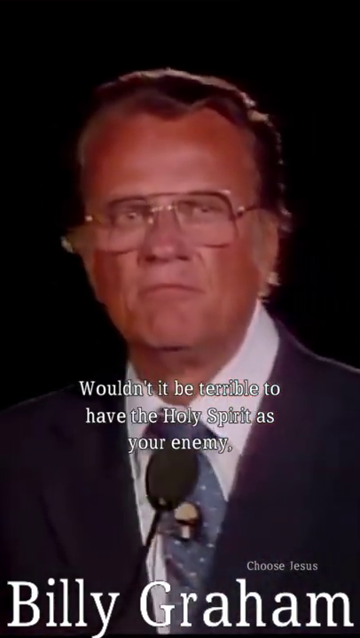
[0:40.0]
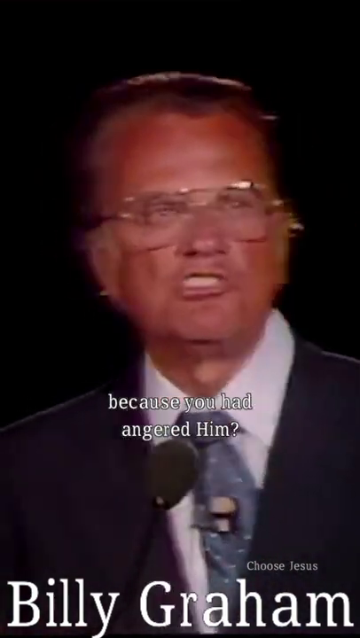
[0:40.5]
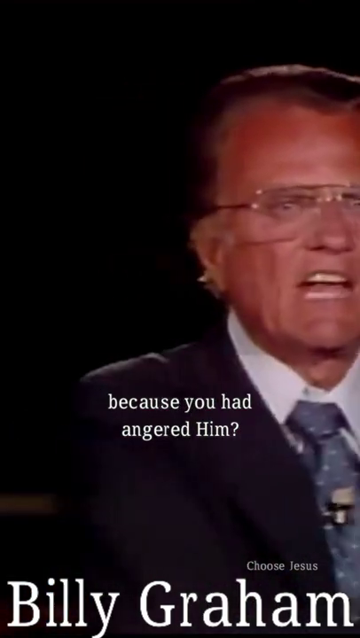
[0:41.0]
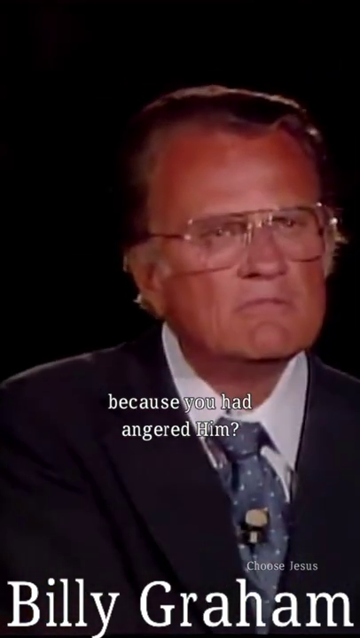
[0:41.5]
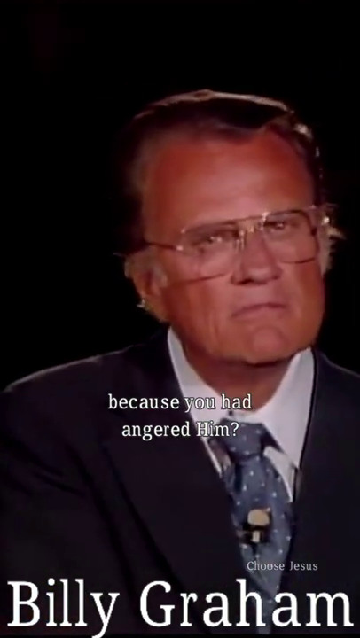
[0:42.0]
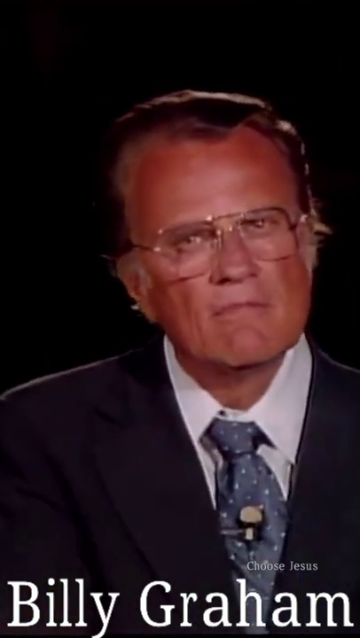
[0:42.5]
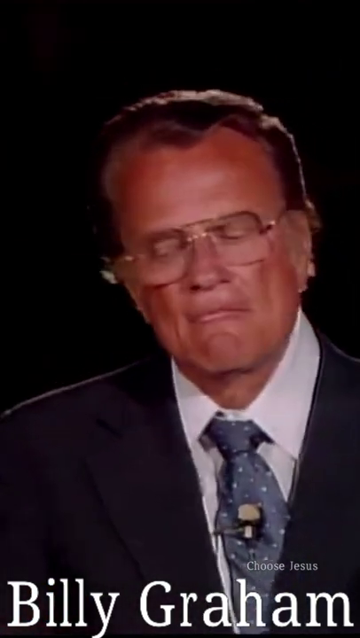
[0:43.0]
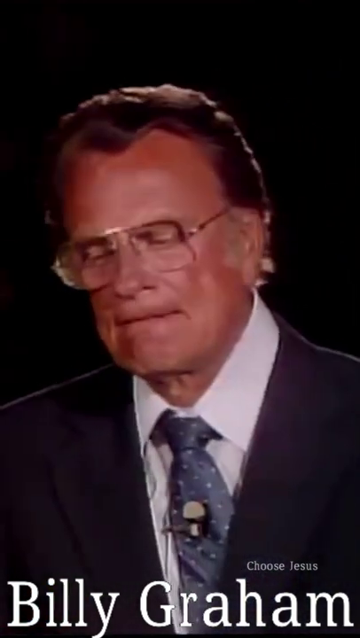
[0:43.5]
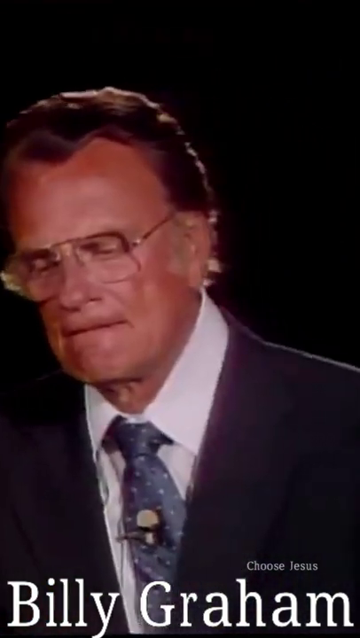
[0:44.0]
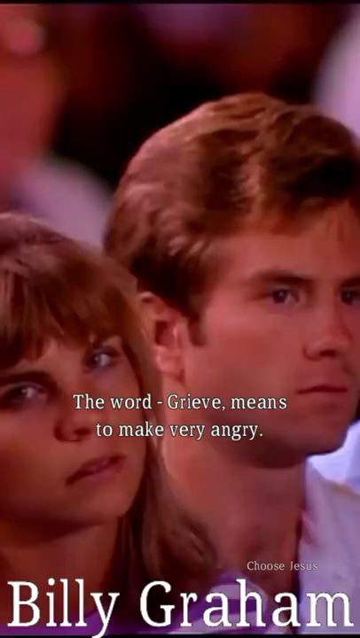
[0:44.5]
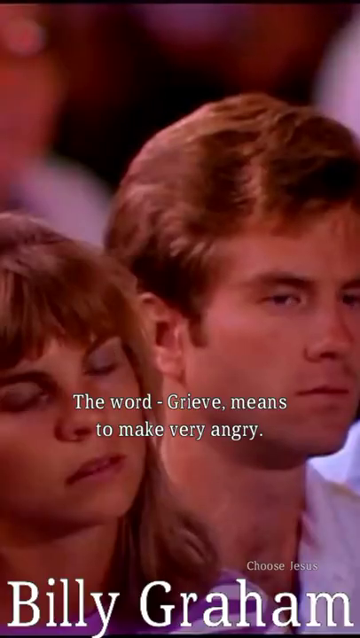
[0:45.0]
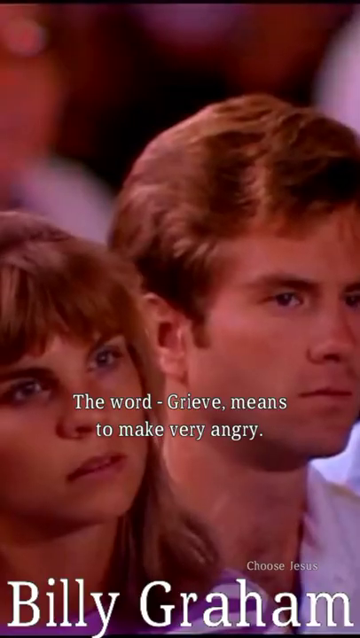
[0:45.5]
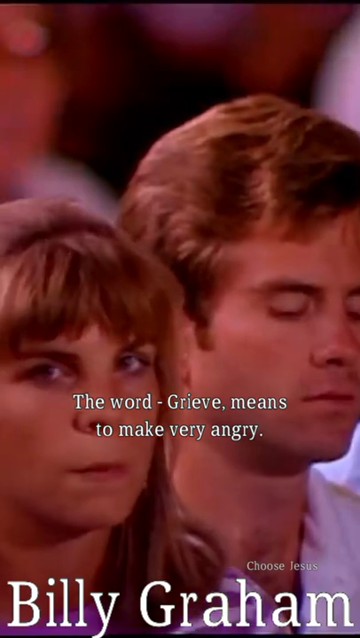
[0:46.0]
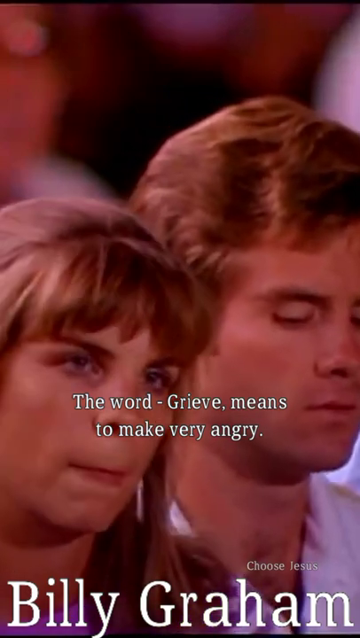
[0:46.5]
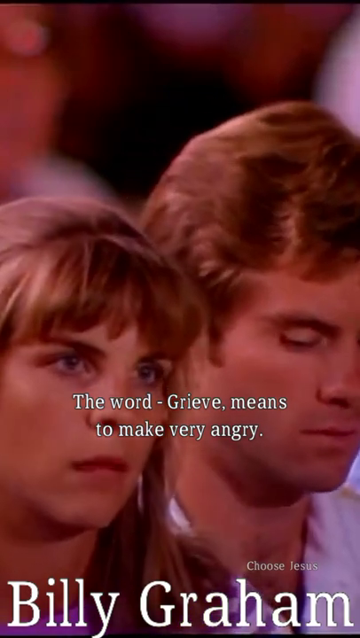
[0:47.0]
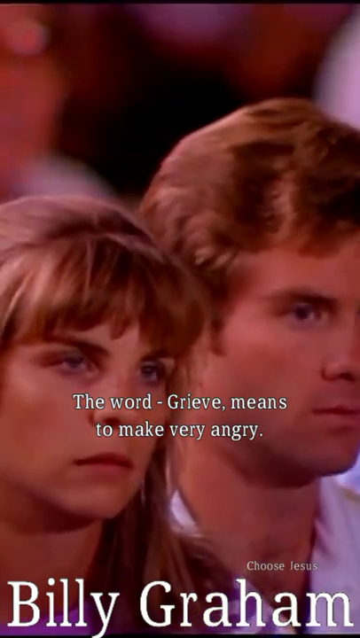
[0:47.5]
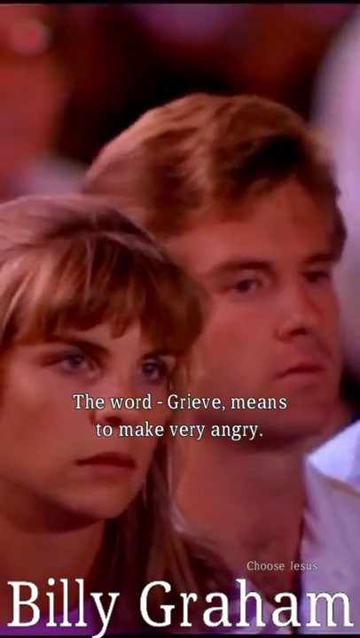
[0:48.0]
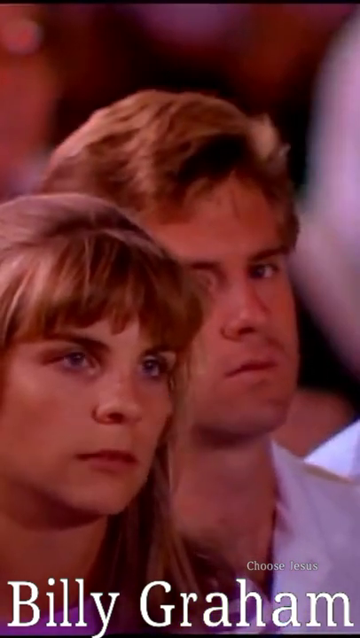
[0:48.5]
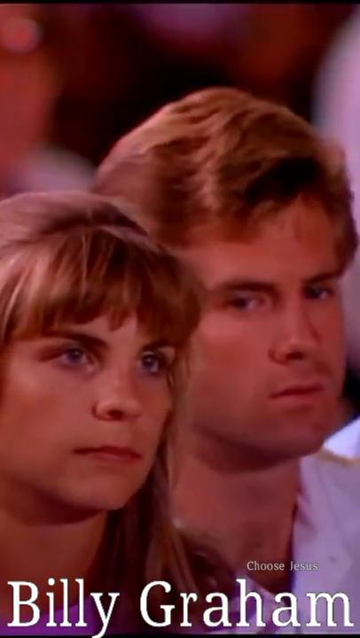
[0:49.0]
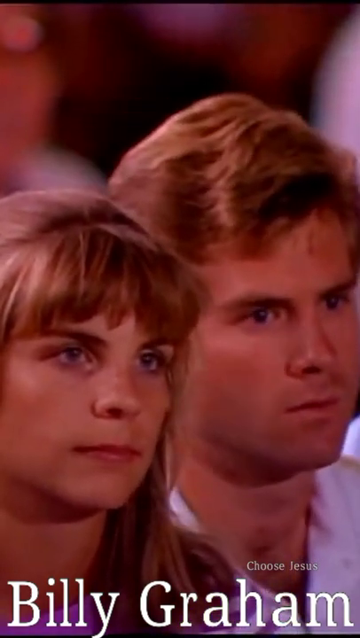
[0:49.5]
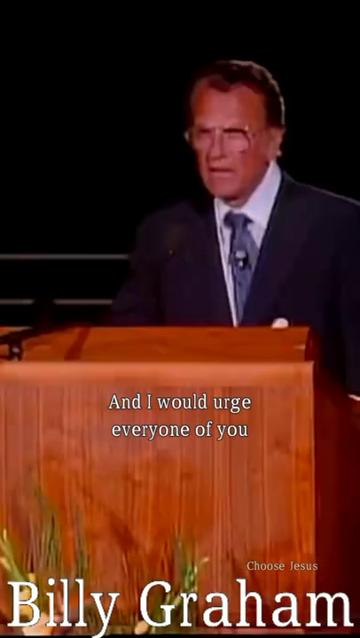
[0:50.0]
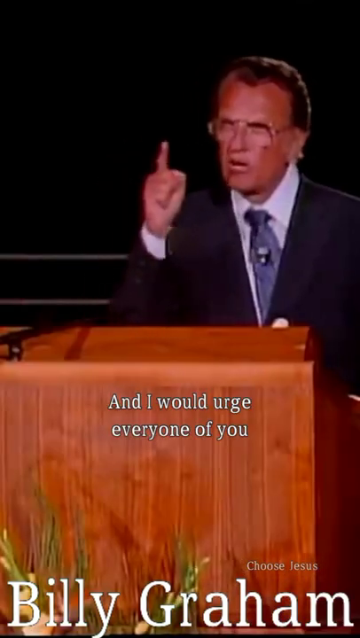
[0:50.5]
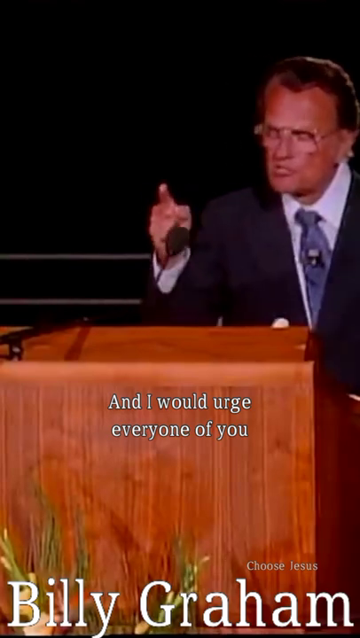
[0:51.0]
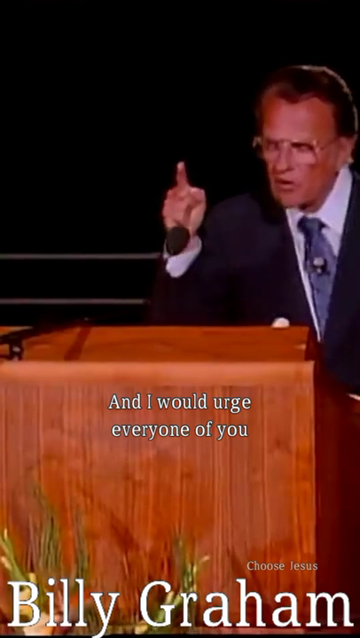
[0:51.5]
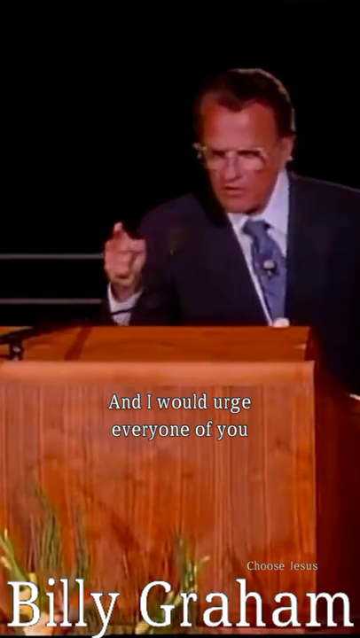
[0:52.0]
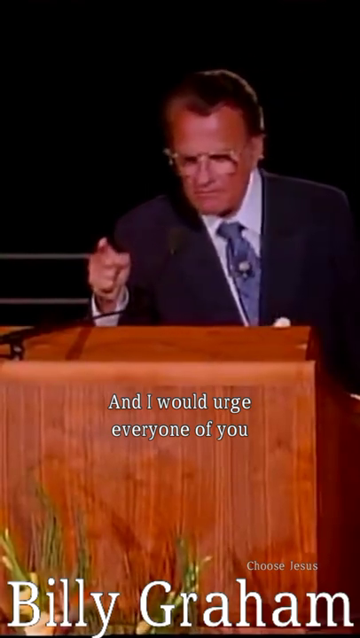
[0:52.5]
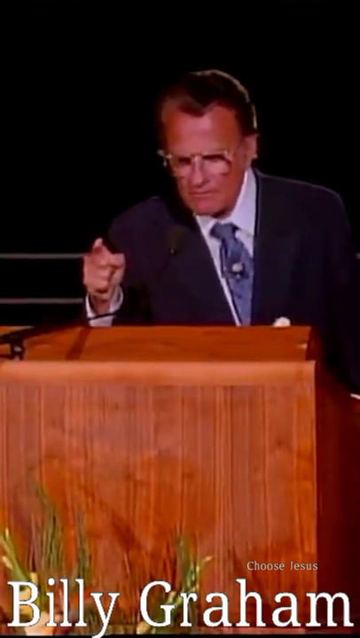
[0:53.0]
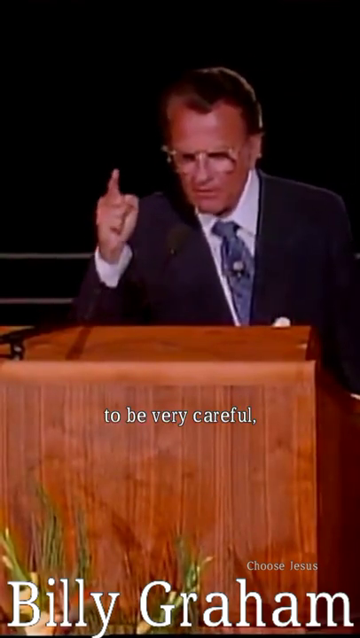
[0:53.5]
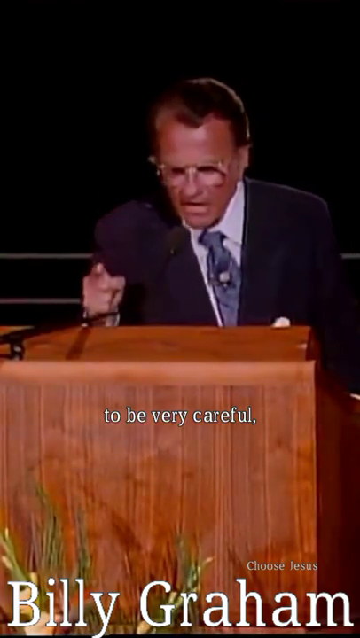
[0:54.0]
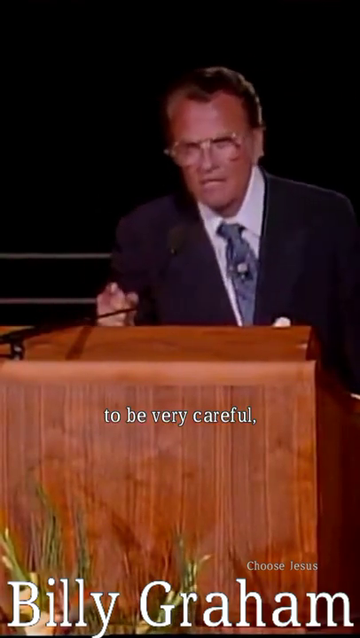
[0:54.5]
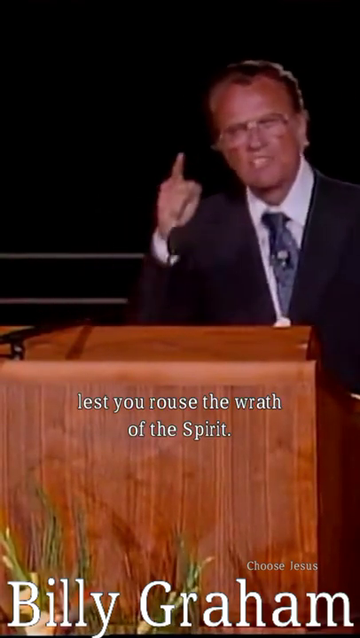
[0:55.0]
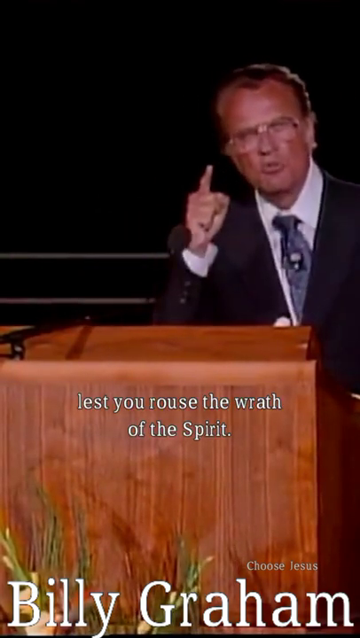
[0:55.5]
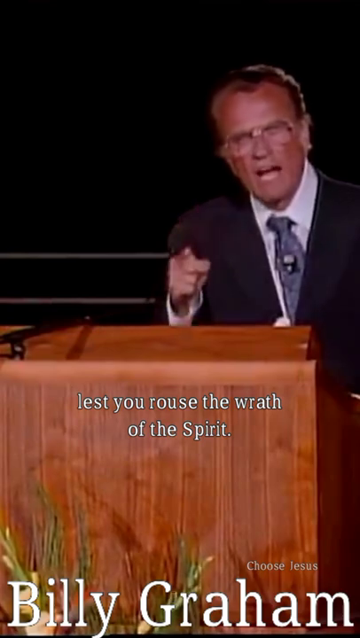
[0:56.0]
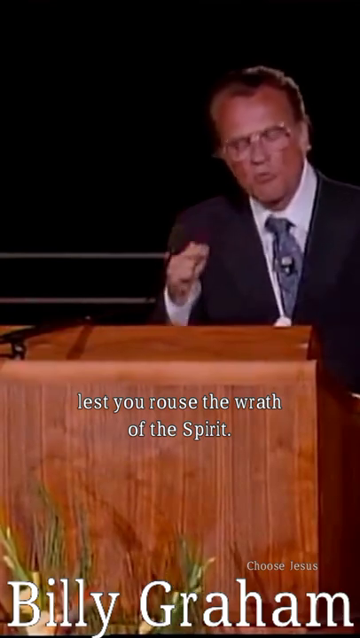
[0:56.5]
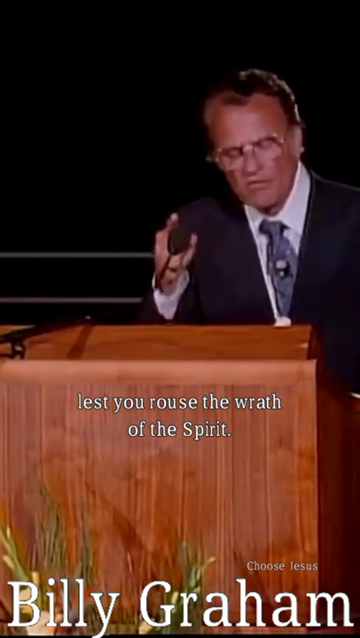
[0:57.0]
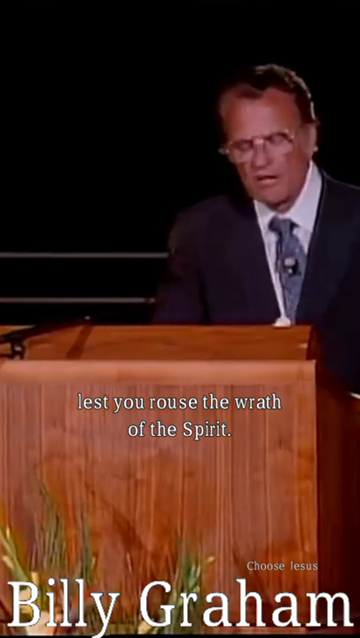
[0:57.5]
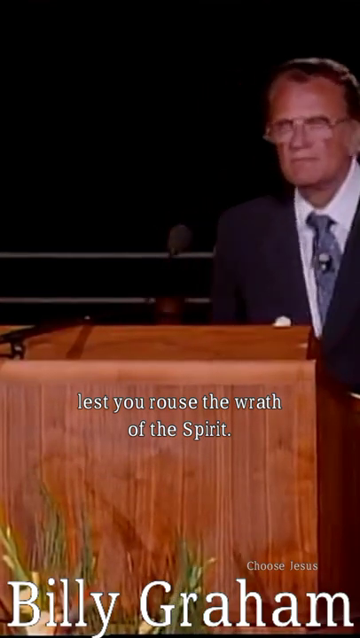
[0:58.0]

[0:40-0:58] Billy Graham looks straight forward into the congregation while the camera stays fixed on his profile. Then some people in the audience are shown: what looks like a young couple, a woman on the left and a man on the right, staring forward and listening to the sermon. The shot cuts back to the pastor, showing more of the front of the podium. What looks like plants, with leaves, appear on the bottom left of the frame. The preacher's words are displayed as subtitles near the top of the podium. He has his fist pulled up with his right index finger pointed out, and as he enunciates his words he points and gestures downward to accentuate his points.